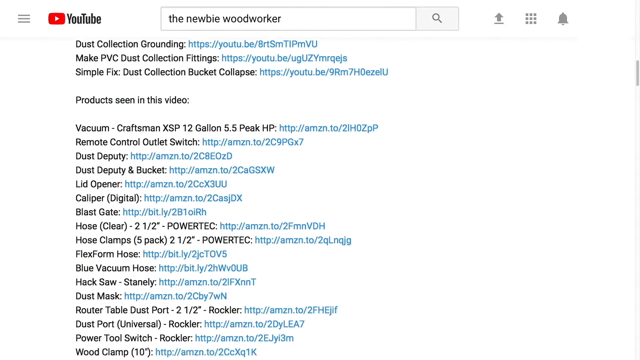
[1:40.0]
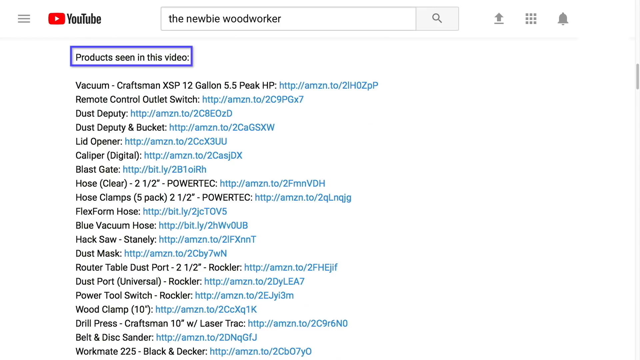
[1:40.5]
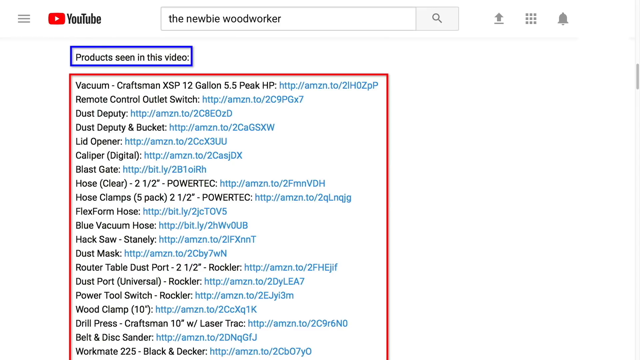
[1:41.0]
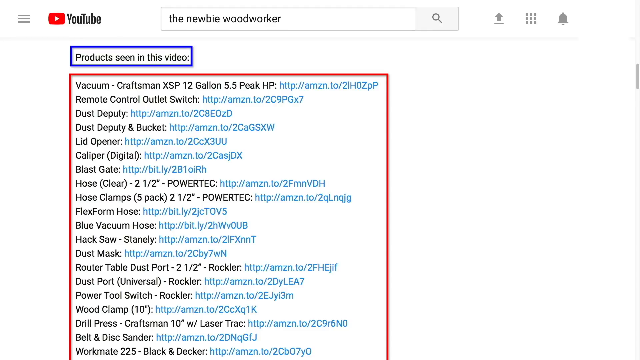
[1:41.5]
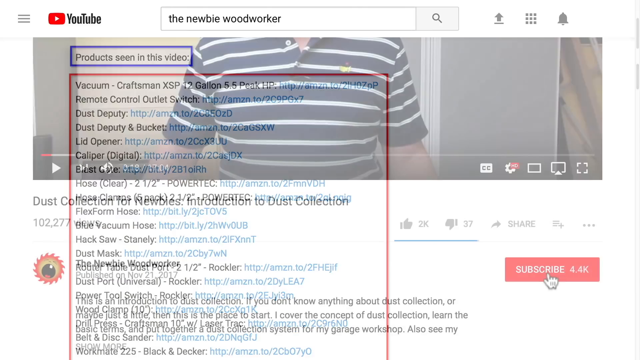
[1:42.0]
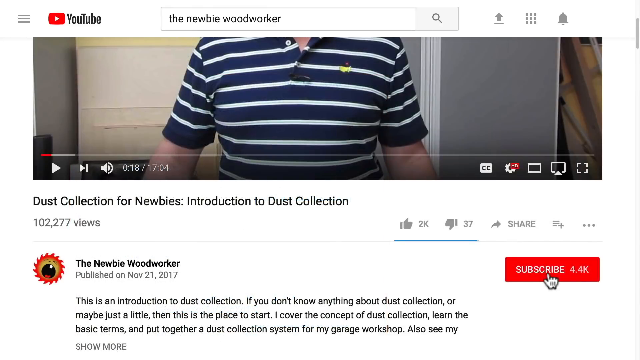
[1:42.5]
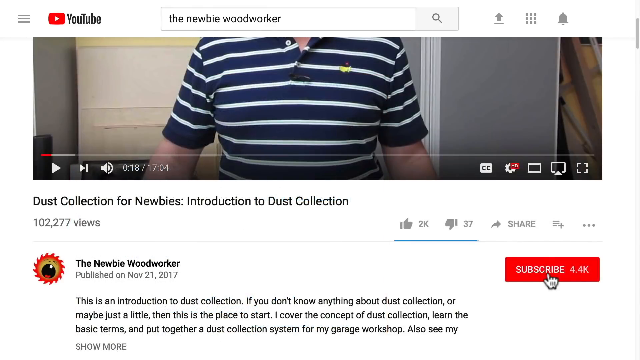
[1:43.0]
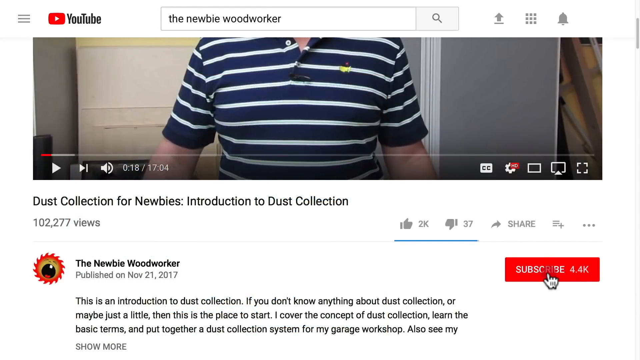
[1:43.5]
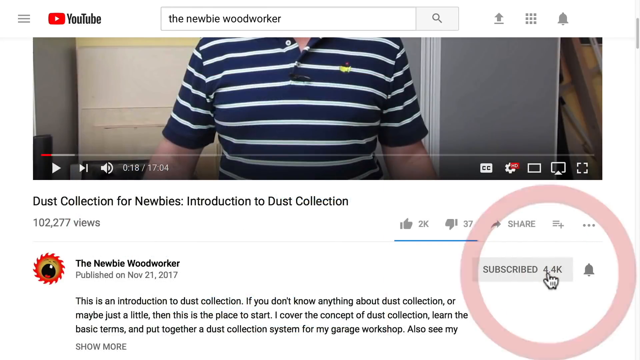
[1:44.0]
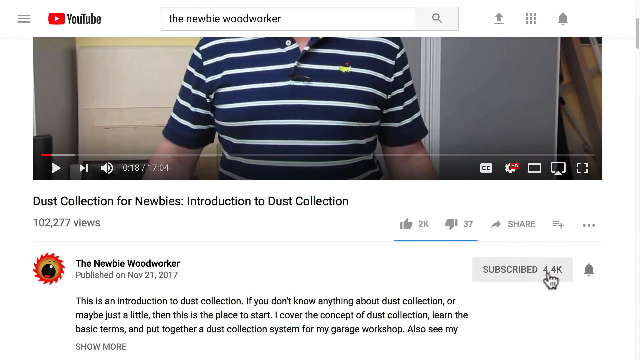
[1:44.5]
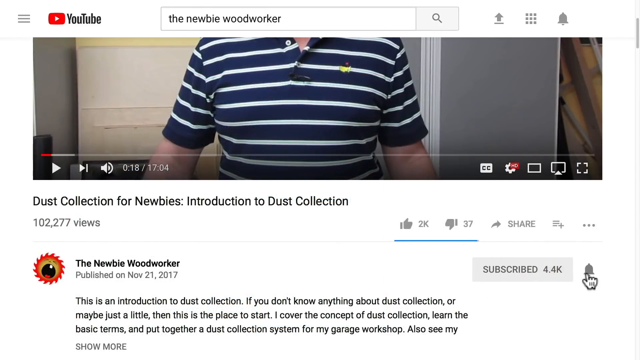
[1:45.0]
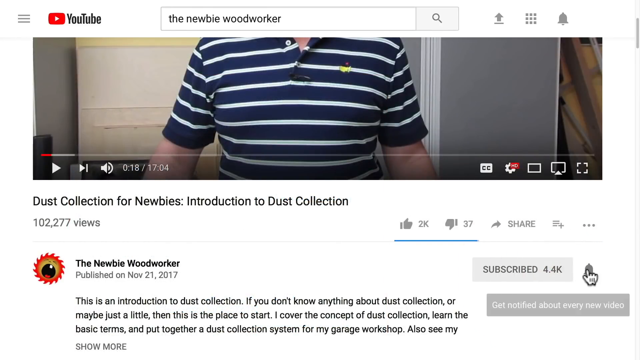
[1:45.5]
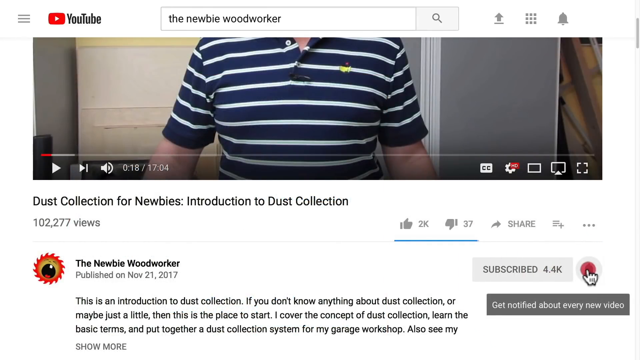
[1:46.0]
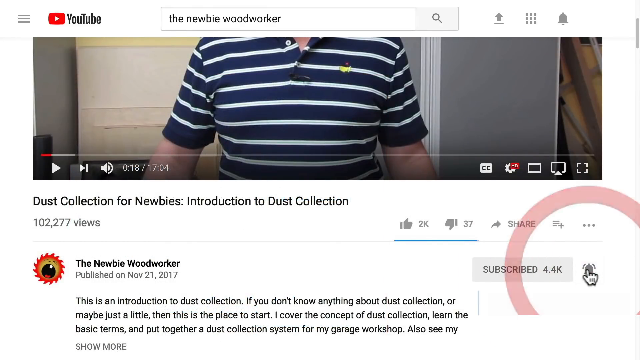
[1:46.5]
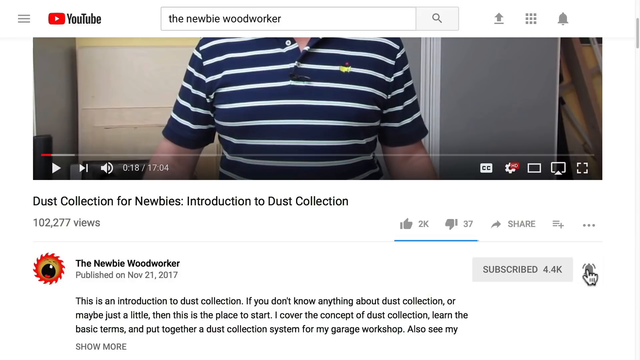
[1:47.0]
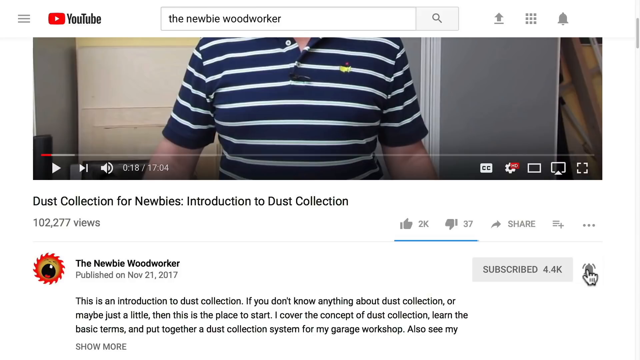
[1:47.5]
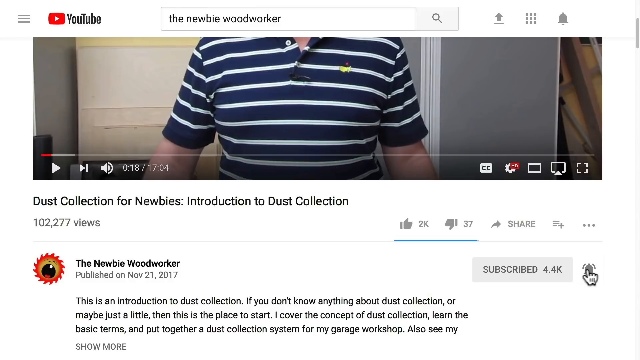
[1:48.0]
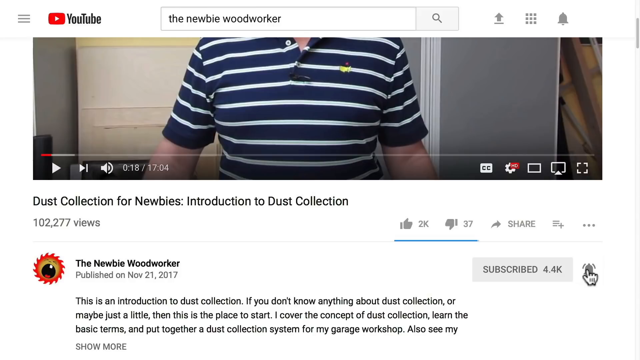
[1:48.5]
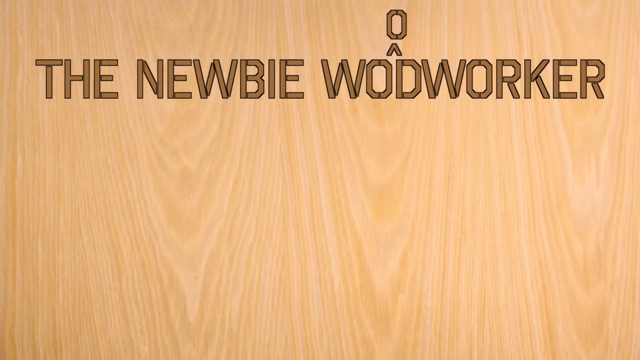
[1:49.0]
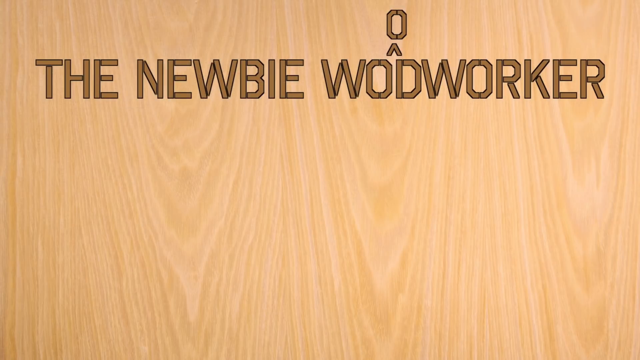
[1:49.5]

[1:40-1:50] A white screen shows YouTube in the upper left corner, with "The Newbie Woodworker" in the search bar. Below are the results "Dust Collection Grounding," "Make PC Dust Collection Fittings," and "Simple Fix Dust Collection Bucket Collapse." There is also a list of links under "Products seen in this video": "Vacuum Craftsman XSP 12 Gallon 5.5 Peak HP," "Remote Control Outlet Switch," "Dust Deputy," "Dust Deputy and Bucket," "Lid Opener," "Caliper," "Blastgate," "Hose Clear 2.5 inch Powertech," "Hose Clamps 5 pack 2.5 inches Powertech," "Flex Form Hose," "Blue Vacuum Hose," "Hacksaw Stanley," "Dust Mask," "Router Table Dust Port 2.5 inches Rockler," "Dust Port Universal Rockler," and "Power Tool Switch Rockler." The screen then jumps to the man in the video, which is not playing, titled "Dust Collection for Newbies," with "Newbie Woodworker" below it. The mouse indicates clicking on subscribe, and once subscribed, it indicates clicking on alerts to receive alerts for updates.